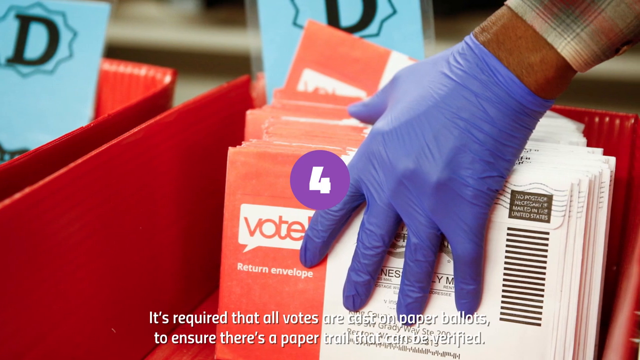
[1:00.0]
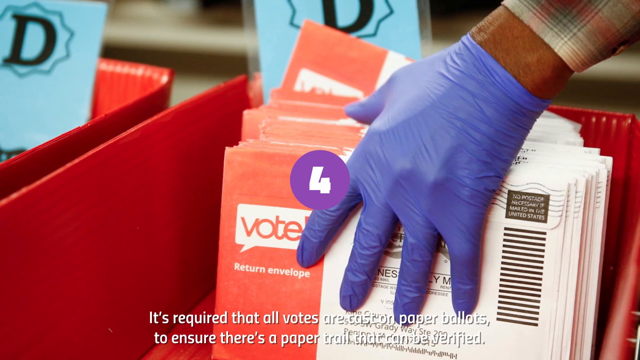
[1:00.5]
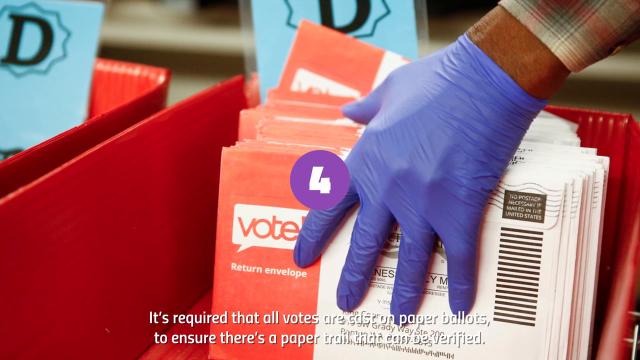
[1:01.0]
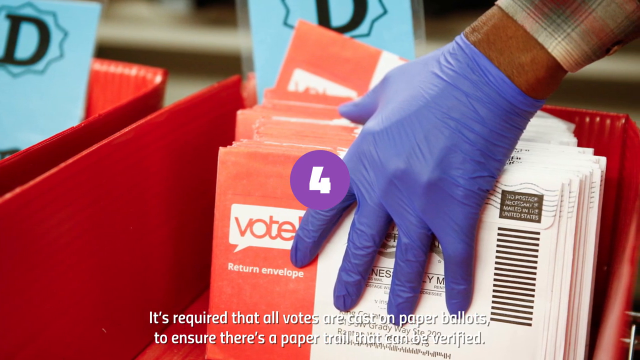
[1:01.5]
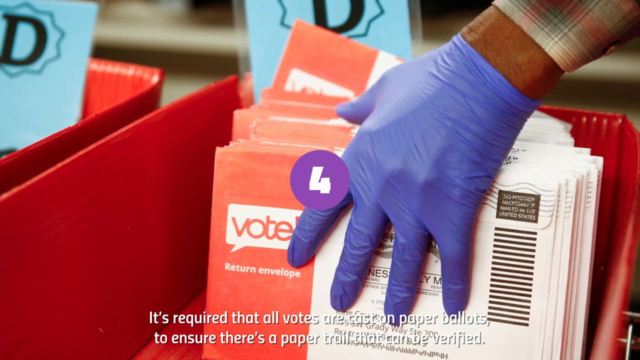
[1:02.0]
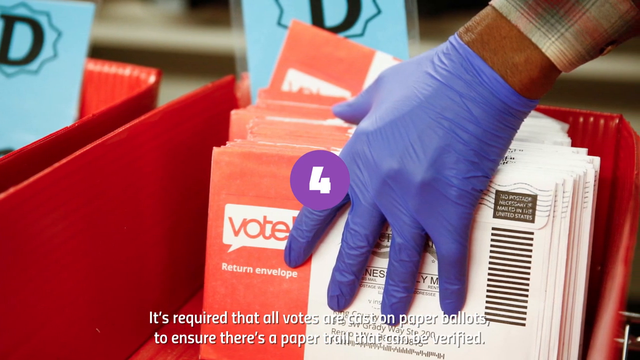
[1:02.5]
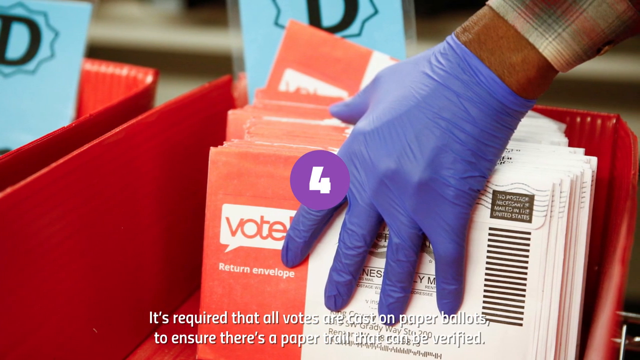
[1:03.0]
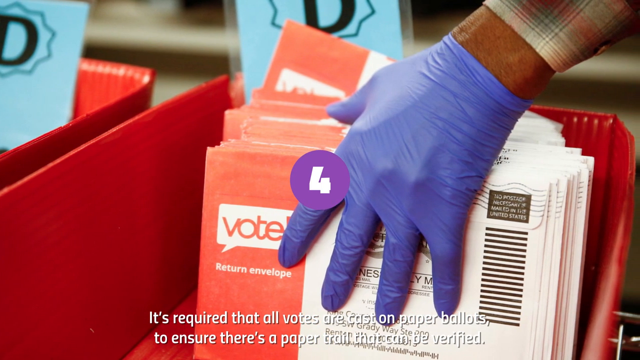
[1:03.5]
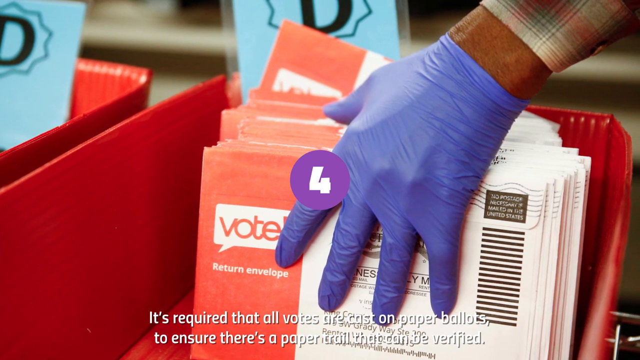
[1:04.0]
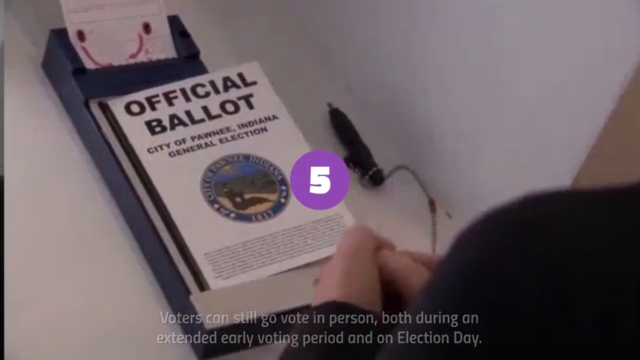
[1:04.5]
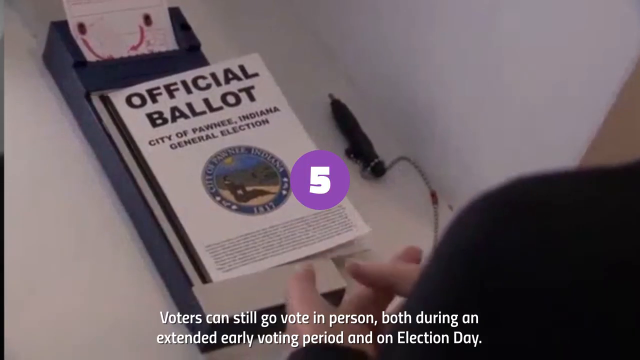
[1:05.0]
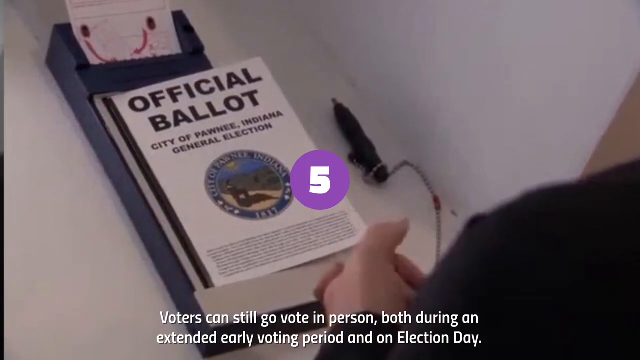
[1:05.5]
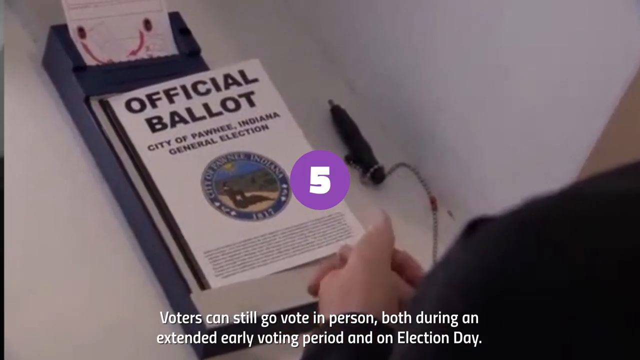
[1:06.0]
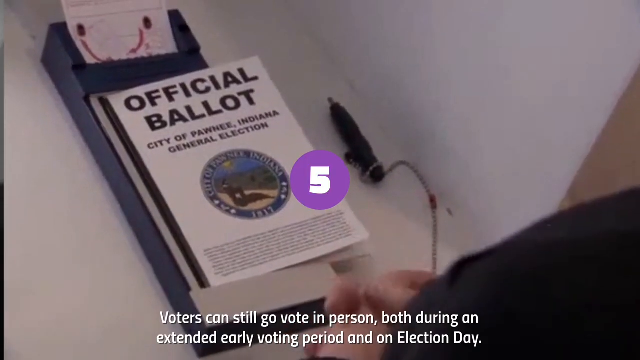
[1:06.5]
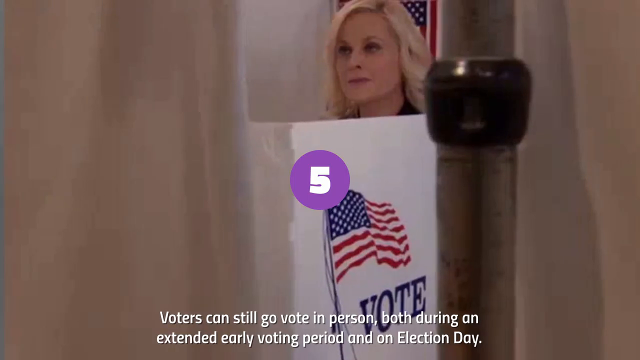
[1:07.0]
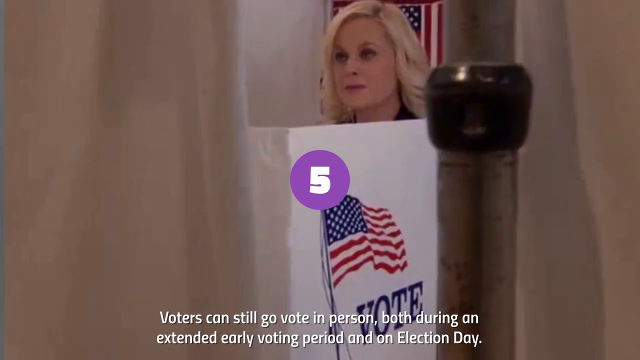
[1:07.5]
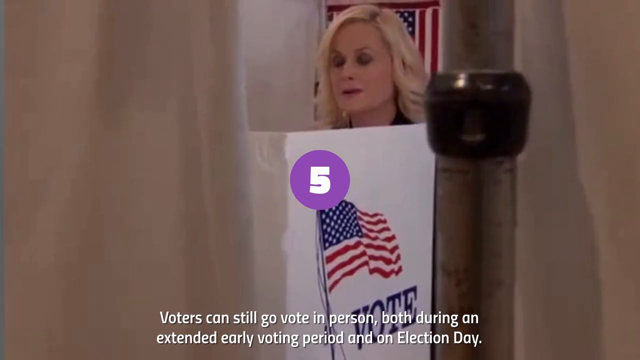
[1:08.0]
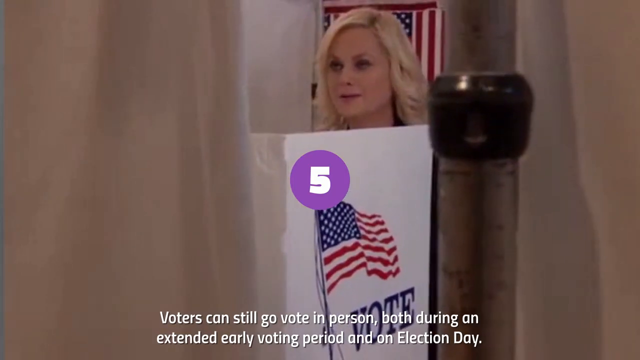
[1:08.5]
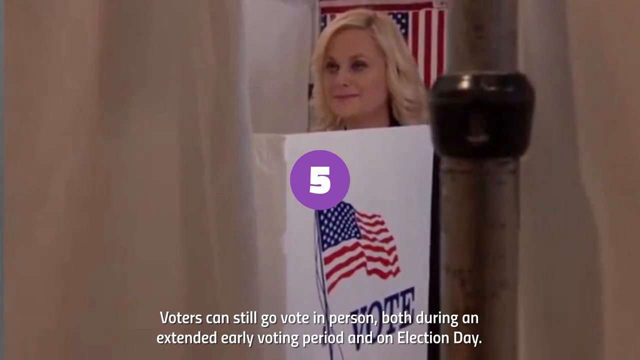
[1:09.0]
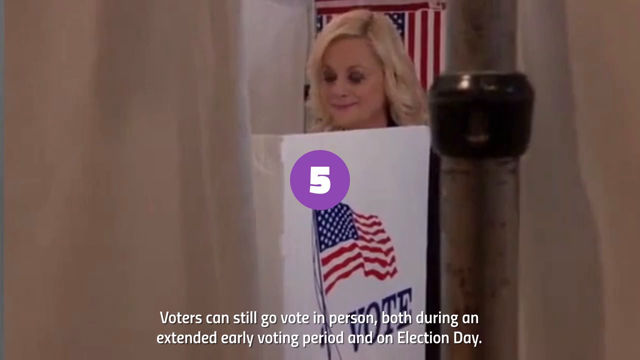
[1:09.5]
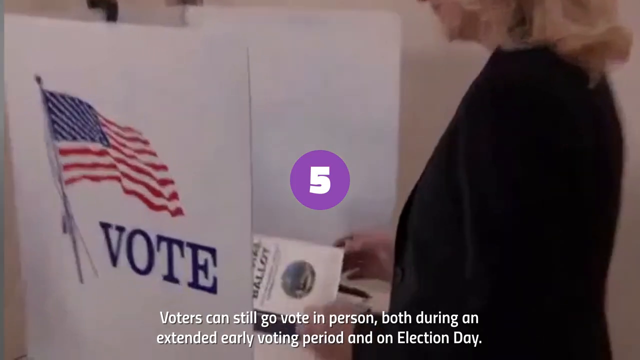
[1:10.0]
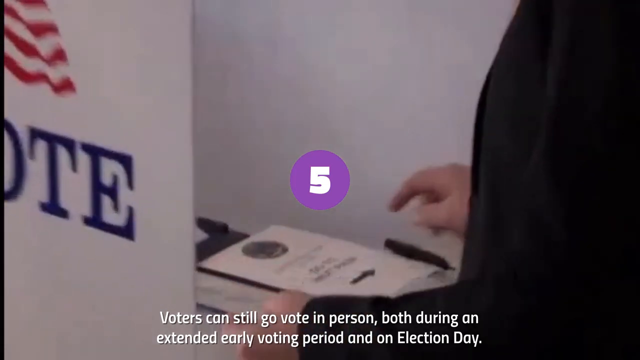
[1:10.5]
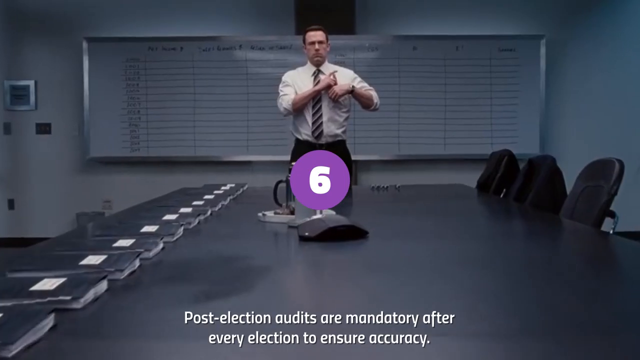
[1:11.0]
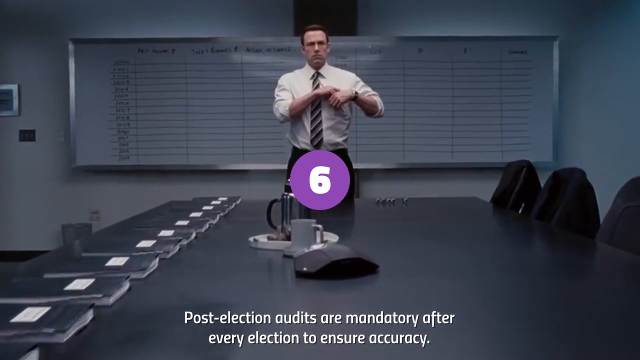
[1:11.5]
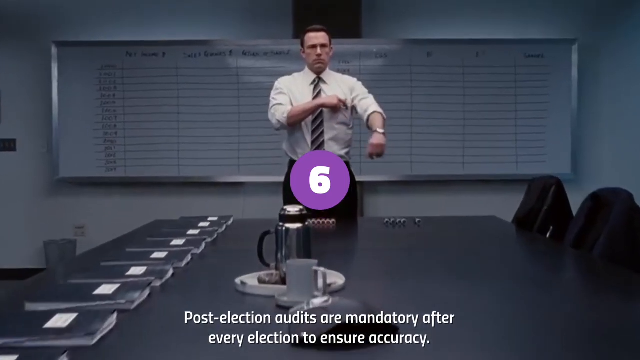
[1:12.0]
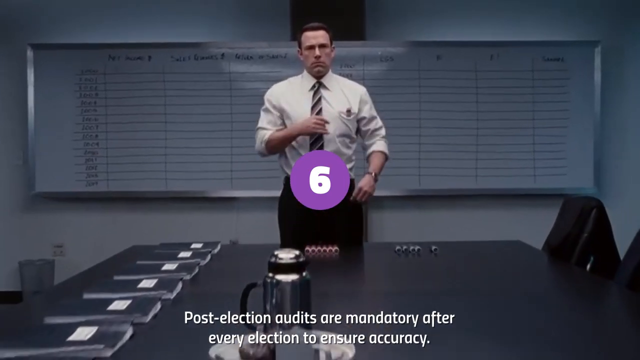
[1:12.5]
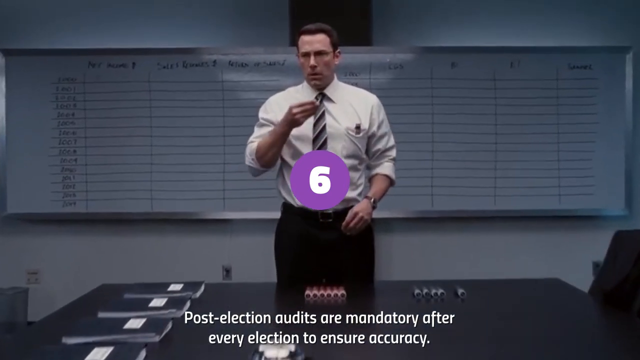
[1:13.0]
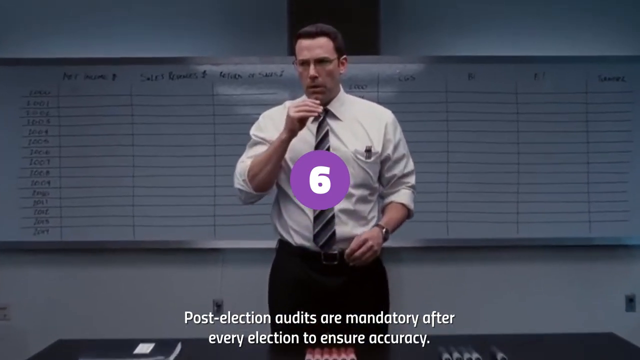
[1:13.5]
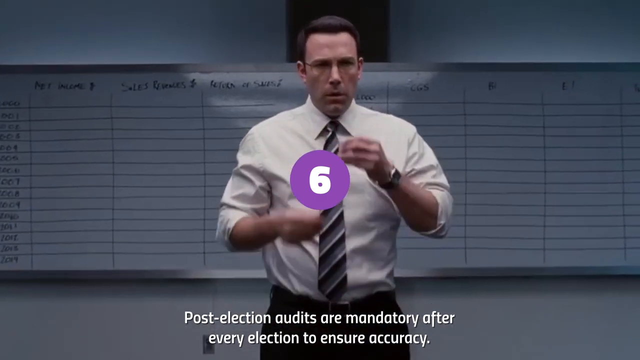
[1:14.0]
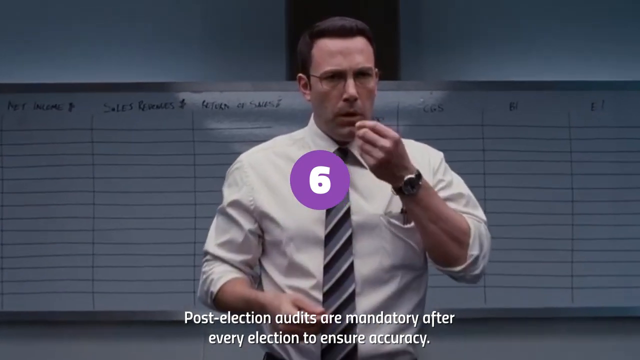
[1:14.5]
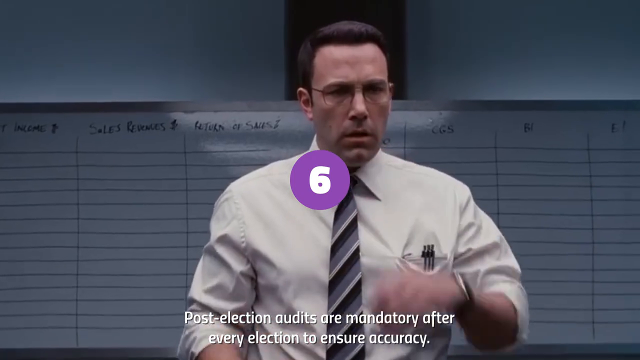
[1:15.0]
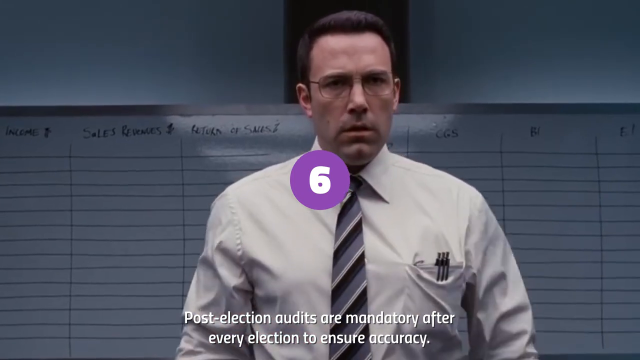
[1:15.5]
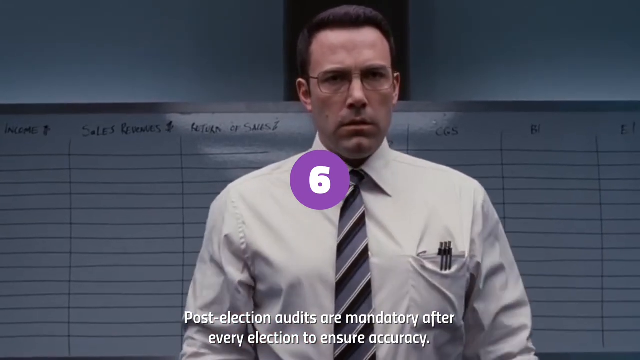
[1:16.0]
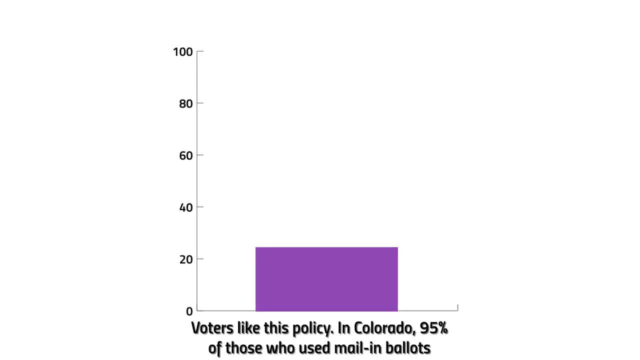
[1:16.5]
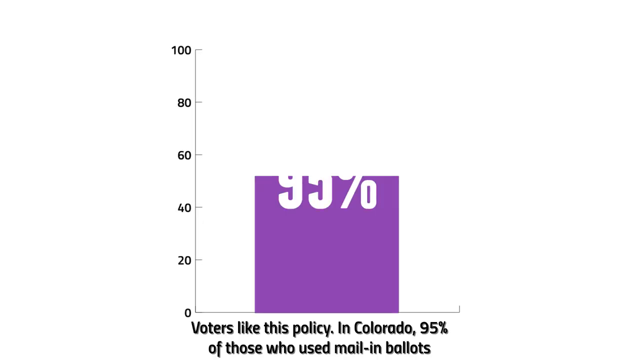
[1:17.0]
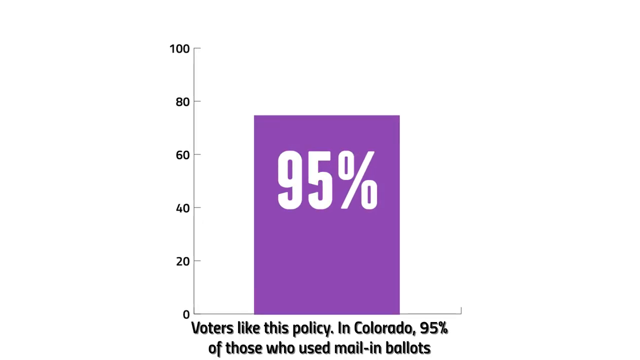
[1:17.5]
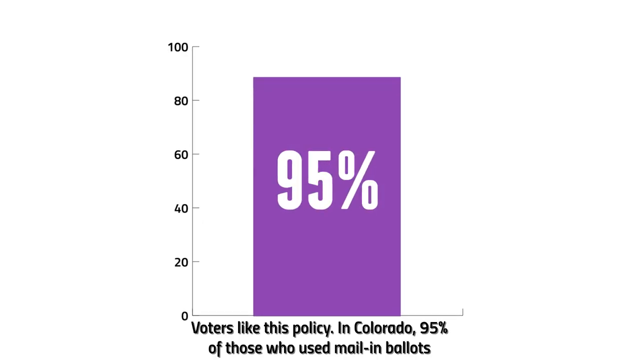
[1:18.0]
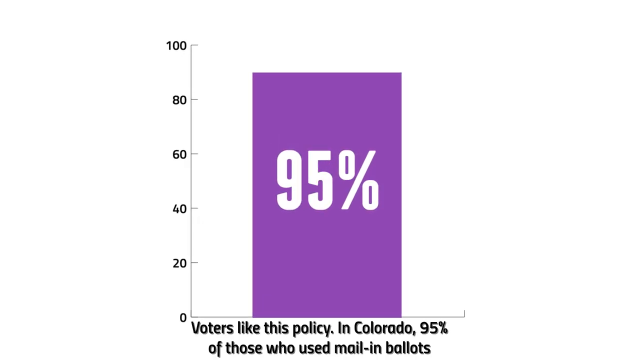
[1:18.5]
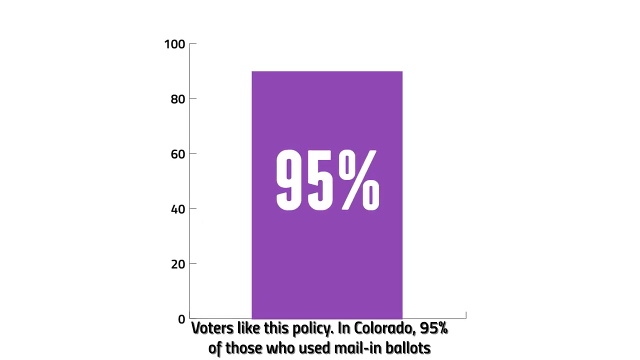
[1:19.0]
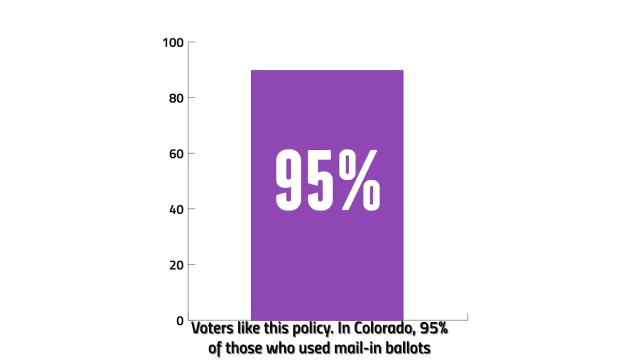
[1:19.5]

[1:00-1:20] A person holds a bag of envelopes in their left hand; the envelopes are labeled with words, including a vote label. The person's hand reaches in and grabs envelopes. A woman stands at a podium. A graph shows 95%. Someone wears a white shirt and a striped tie.